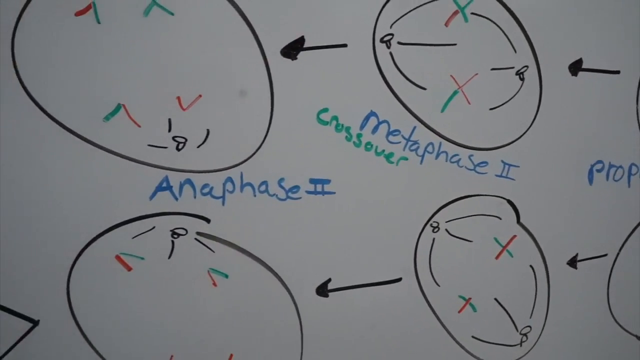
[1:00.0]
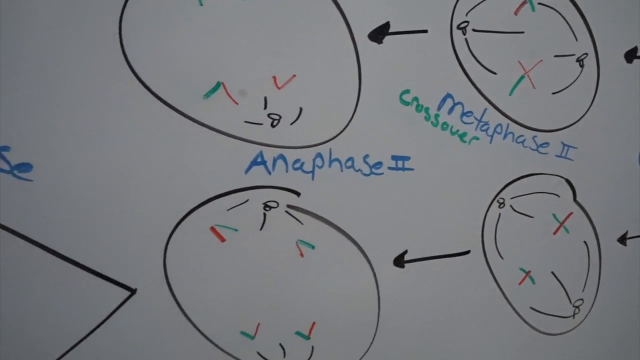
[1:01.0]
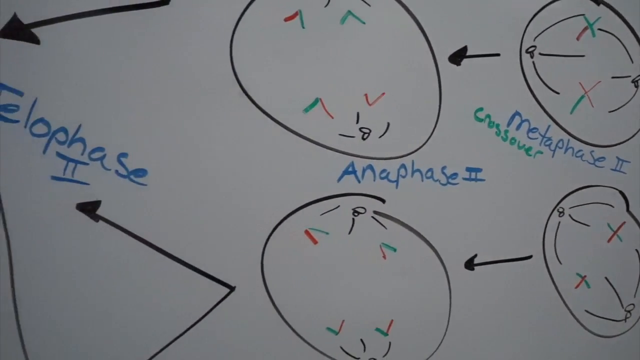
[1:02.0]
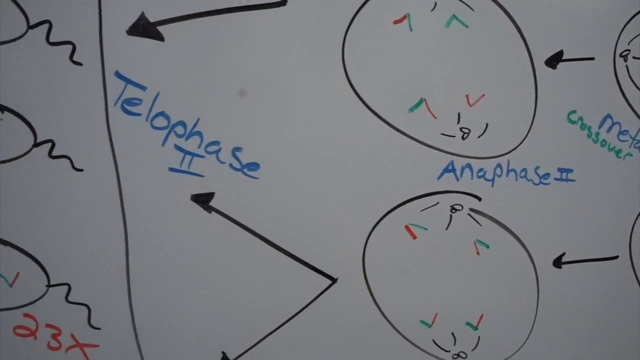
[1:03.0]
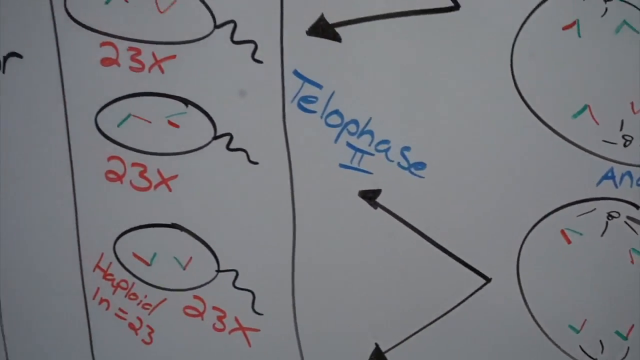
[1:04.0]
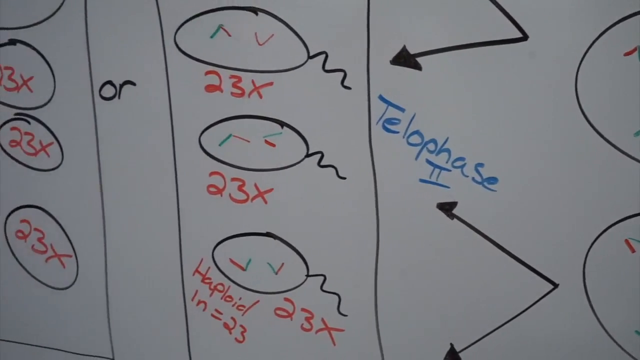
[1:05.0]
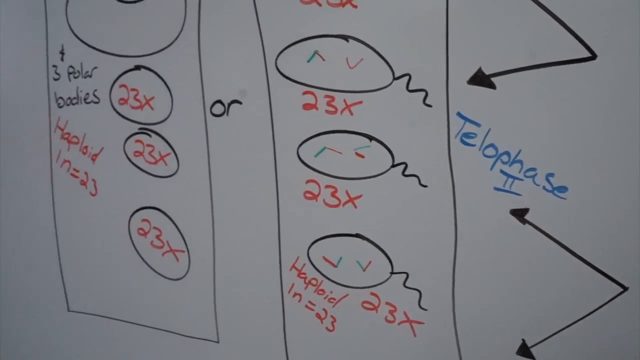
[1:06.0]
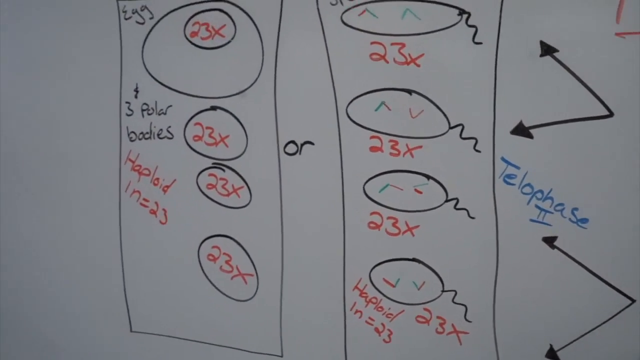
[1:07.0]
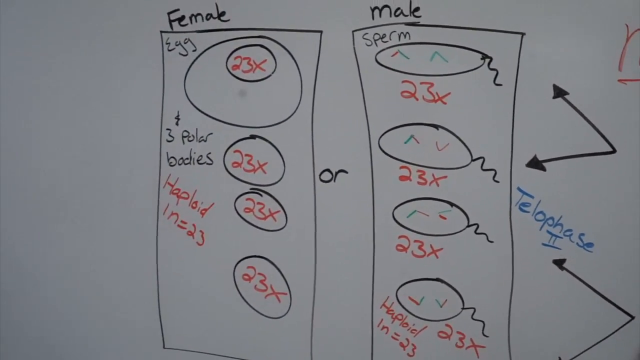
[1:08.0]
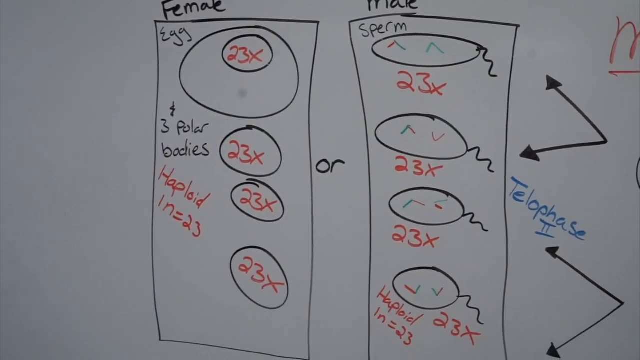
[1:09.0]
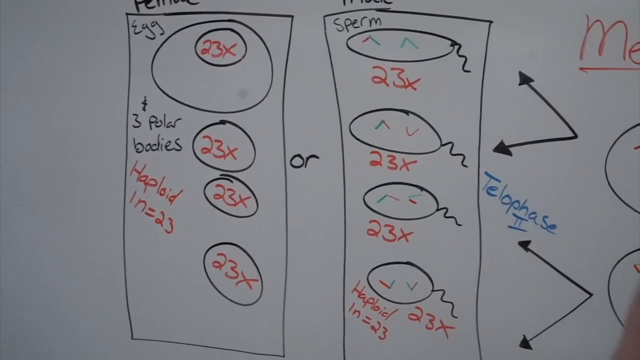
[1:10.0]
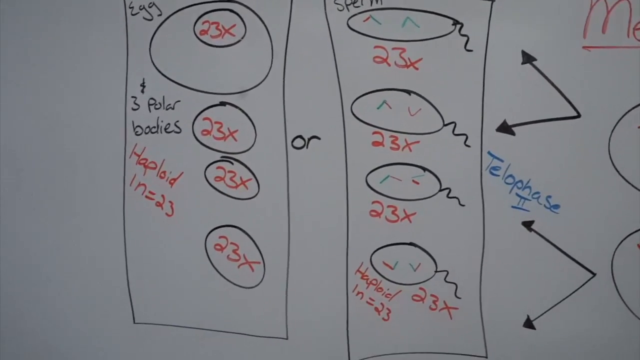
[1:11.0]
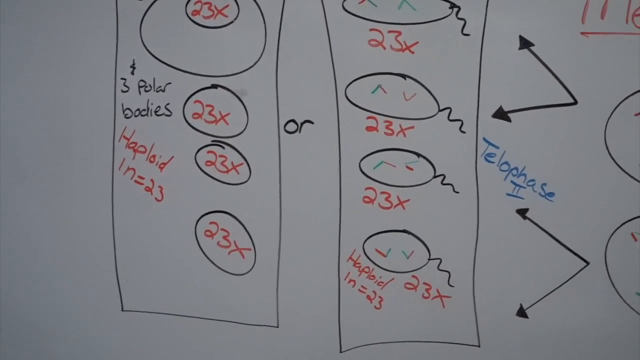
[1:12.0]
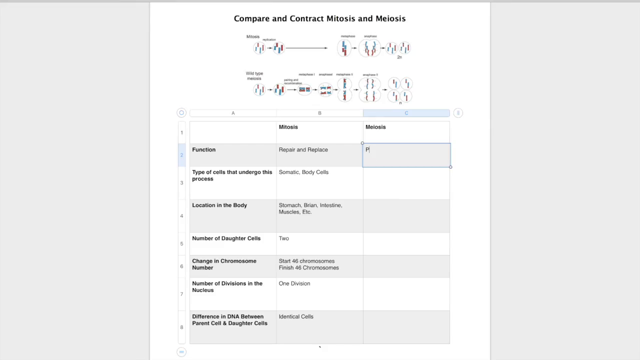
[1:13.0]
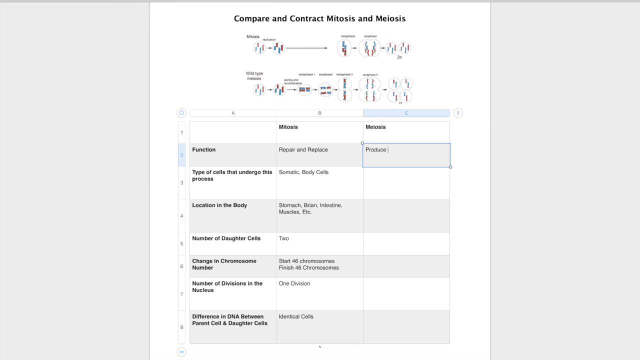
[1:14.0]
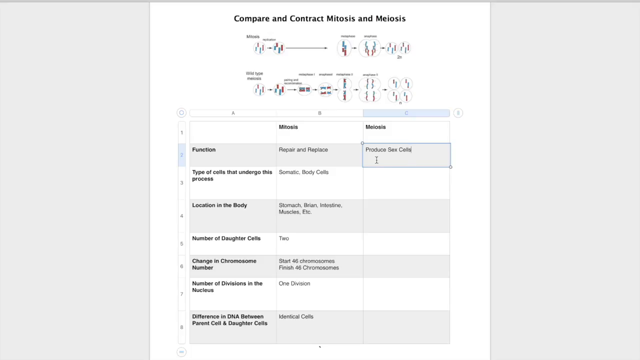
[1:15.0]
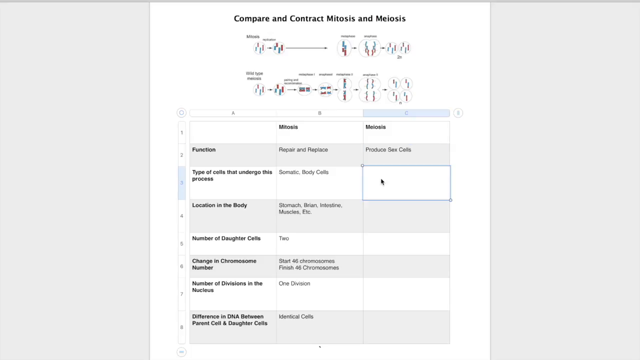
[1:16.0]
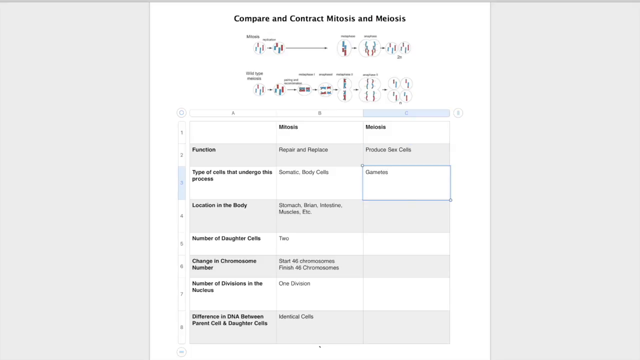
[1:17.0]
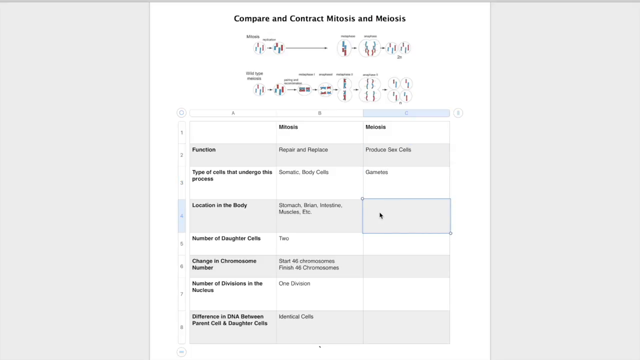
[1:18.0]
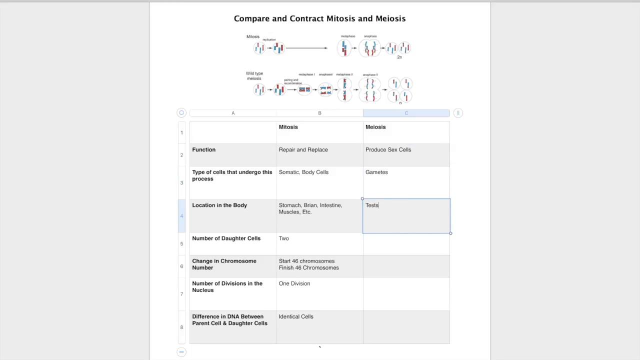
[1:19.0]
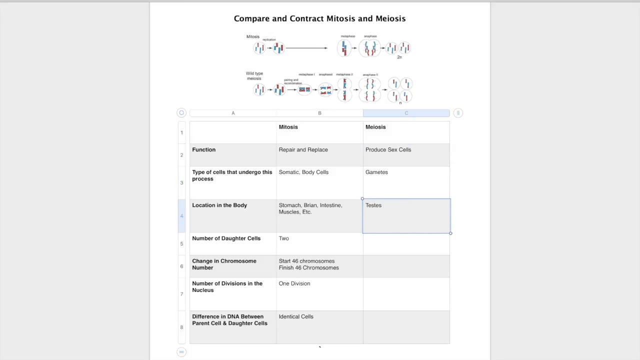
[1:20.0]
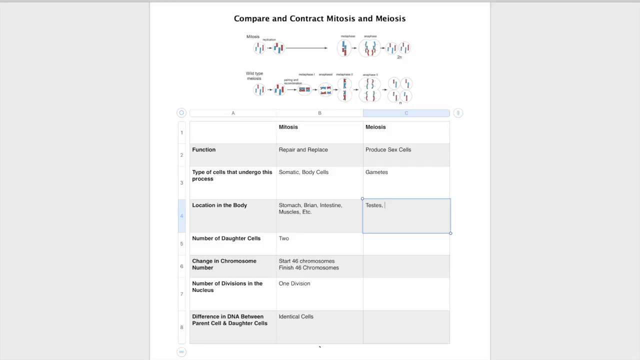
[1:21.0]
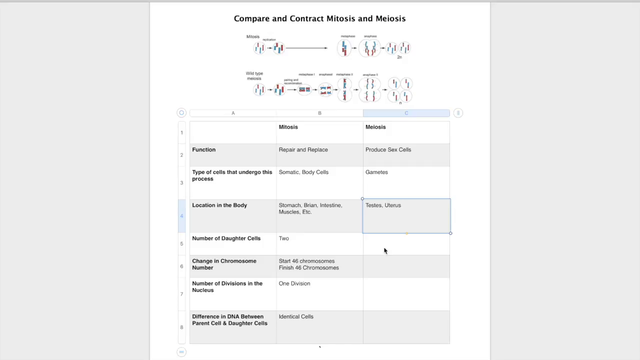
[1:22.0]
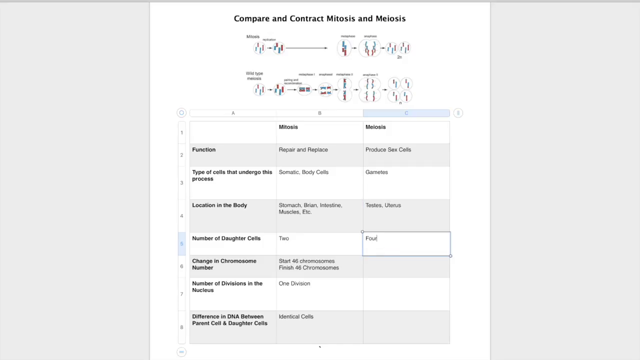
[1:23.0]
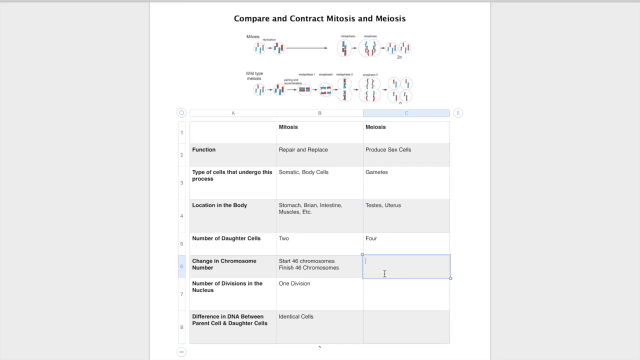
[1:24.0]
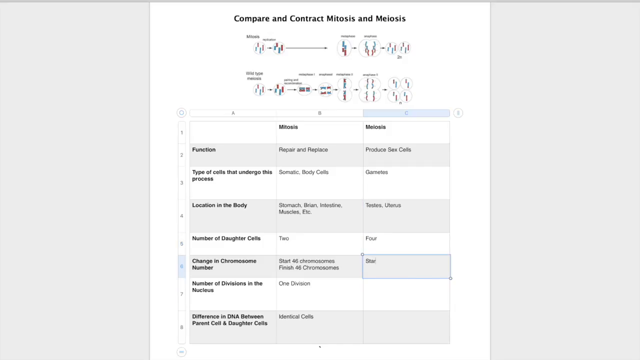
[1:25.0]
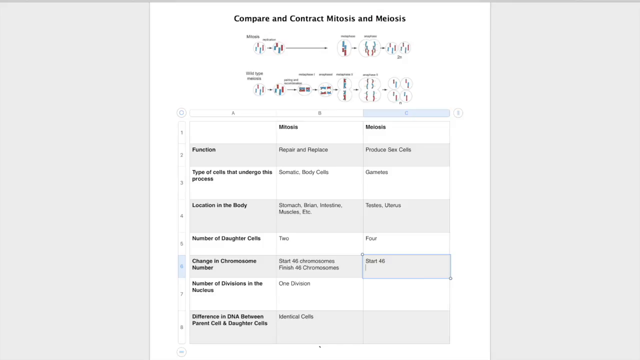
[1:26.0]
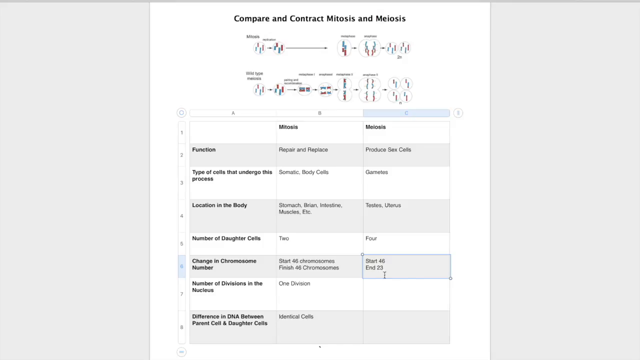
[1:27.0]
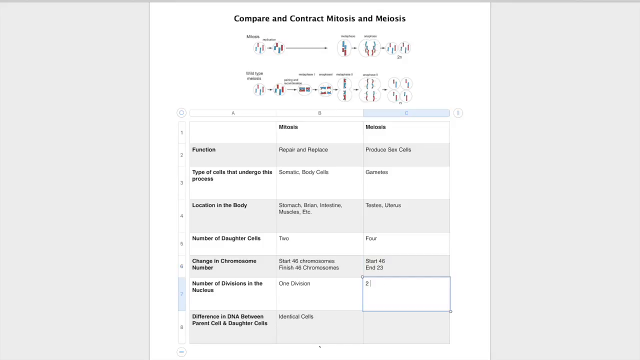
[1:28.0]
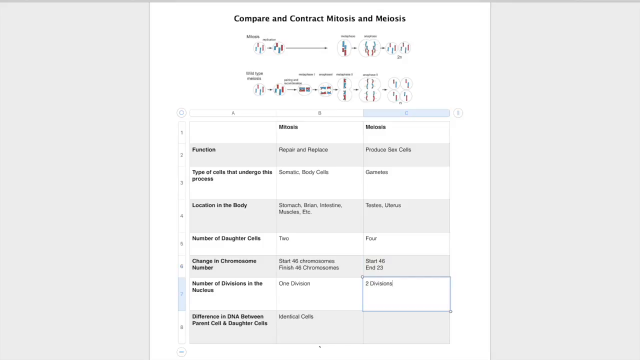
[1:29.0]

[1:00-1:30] A dry erase board shows phases that someone has drawn, connected by black arrows. There are many circles or ovals, some containing X's that are partly green and partly a sort of red color. Everything is labeled in blue, such as "anaphase" and "metaphase two", while the word "crossover" is in green. Each arrow is drawn as a straight line with a colored-in arrowhead. As the video goes on, it passes metaphase two and metaphase three and reaches telophase two, where "23X" is written multiple times in two groups. "Male" is written at the top of the group on the right, which shows sperm drawn as squiggles with tails. The female side says "egg", "three polar bodies" and "haploid 1N = 23".